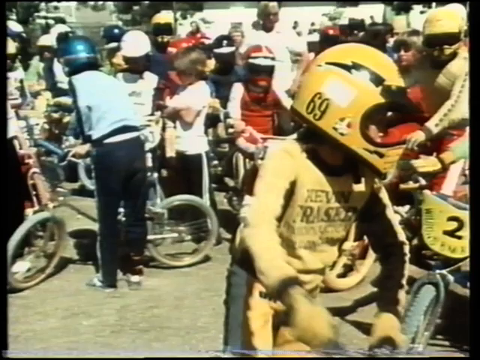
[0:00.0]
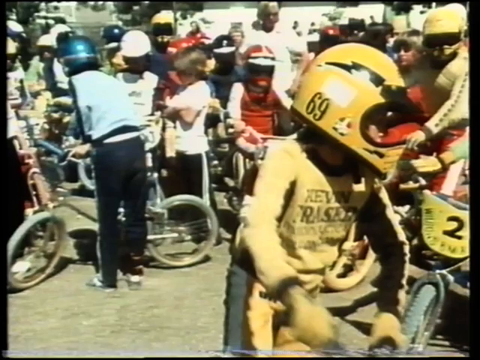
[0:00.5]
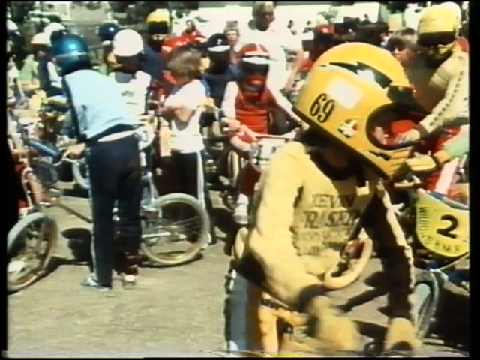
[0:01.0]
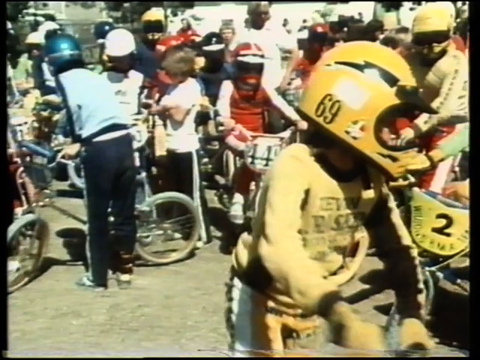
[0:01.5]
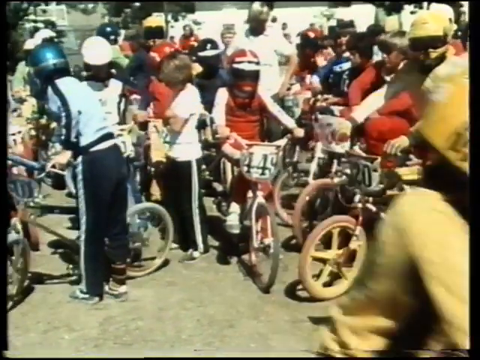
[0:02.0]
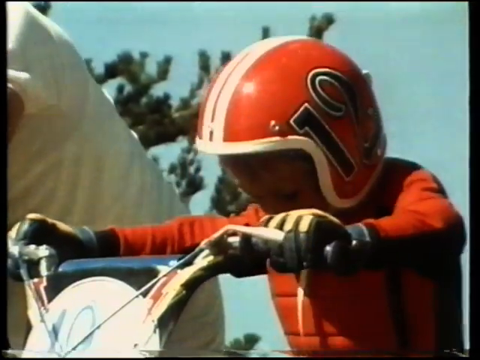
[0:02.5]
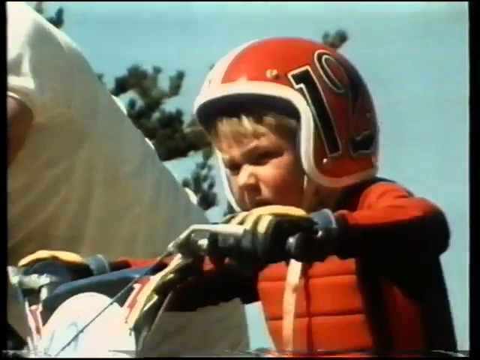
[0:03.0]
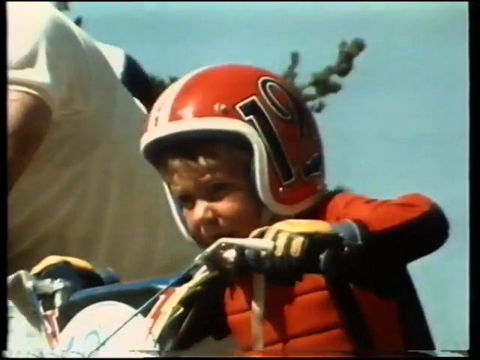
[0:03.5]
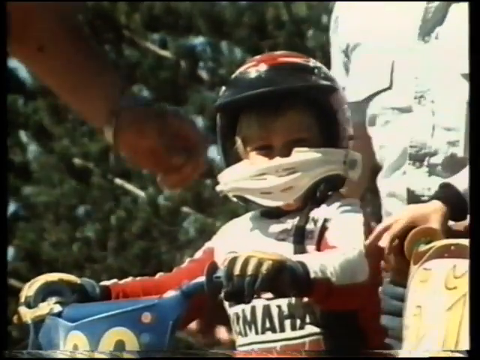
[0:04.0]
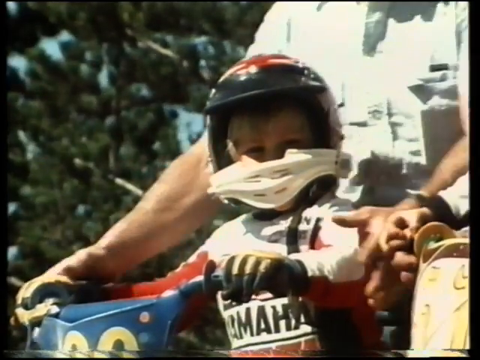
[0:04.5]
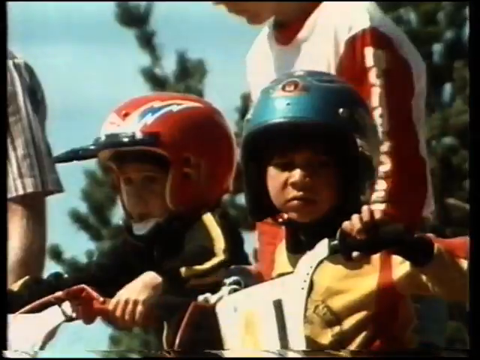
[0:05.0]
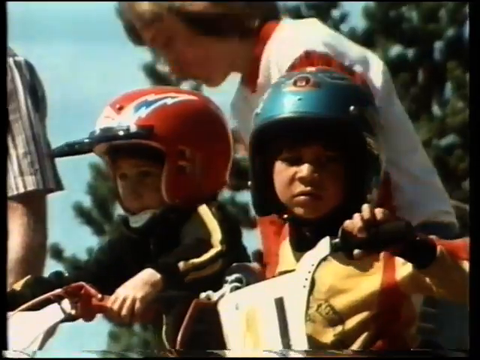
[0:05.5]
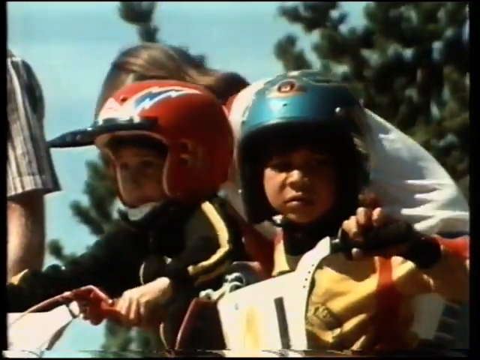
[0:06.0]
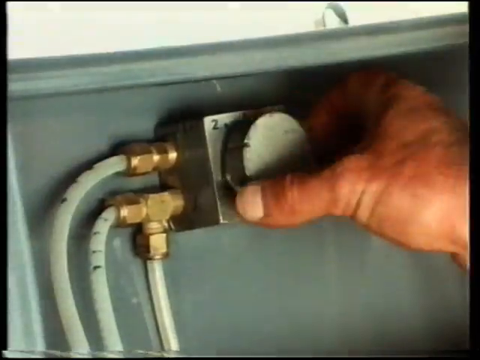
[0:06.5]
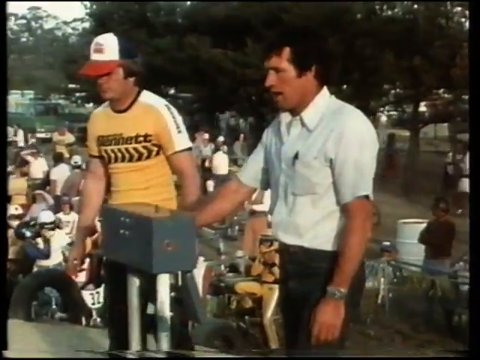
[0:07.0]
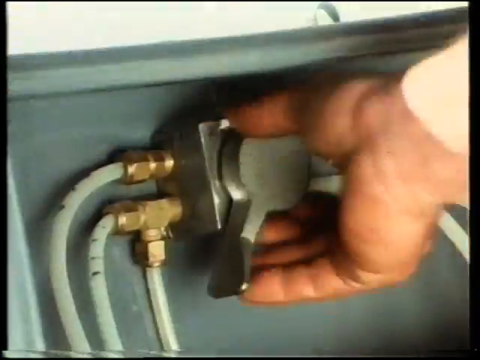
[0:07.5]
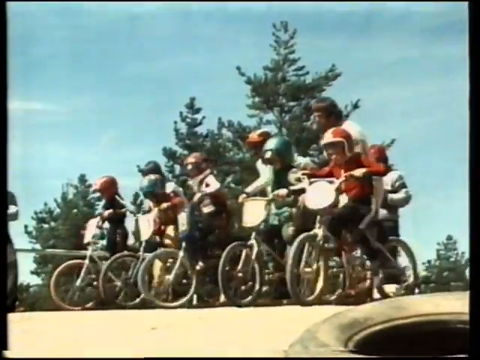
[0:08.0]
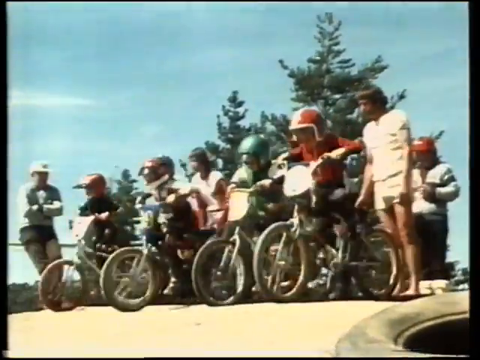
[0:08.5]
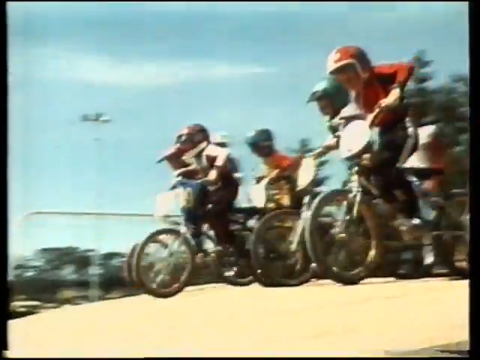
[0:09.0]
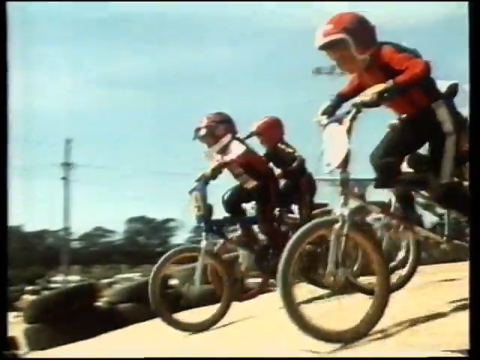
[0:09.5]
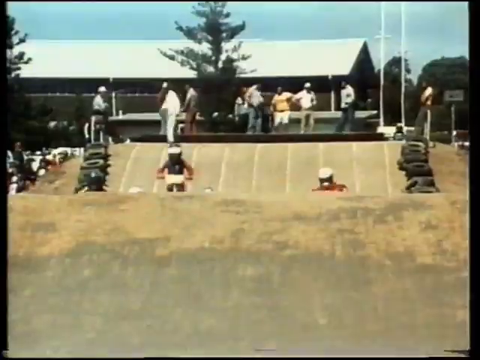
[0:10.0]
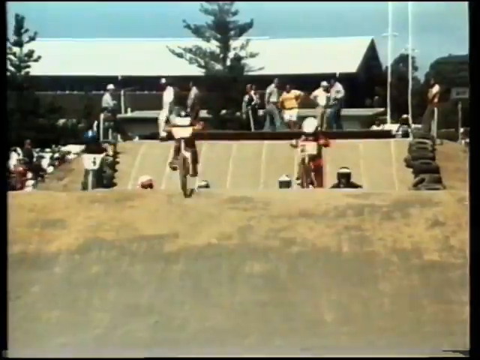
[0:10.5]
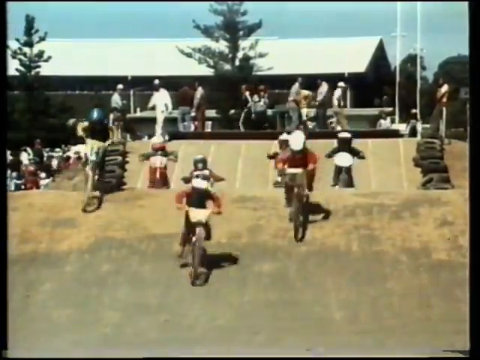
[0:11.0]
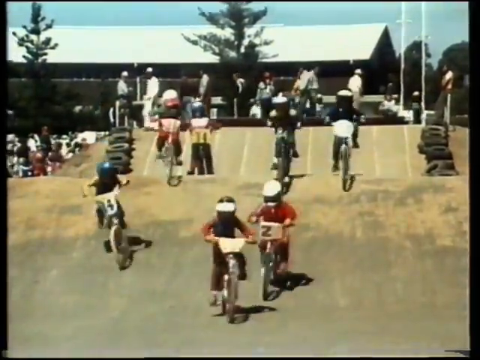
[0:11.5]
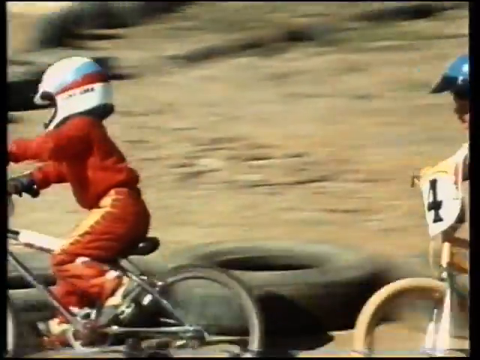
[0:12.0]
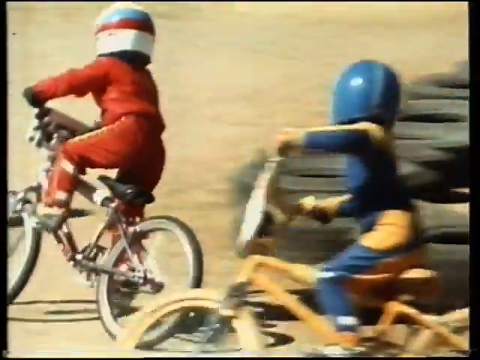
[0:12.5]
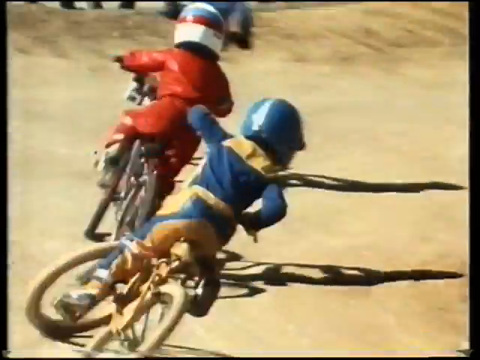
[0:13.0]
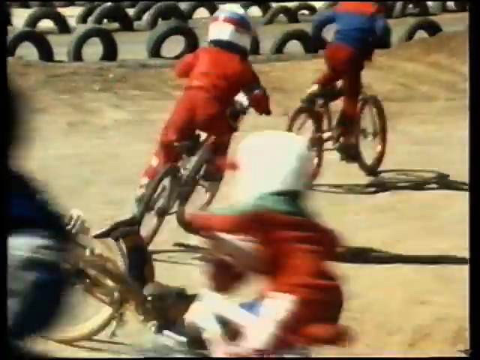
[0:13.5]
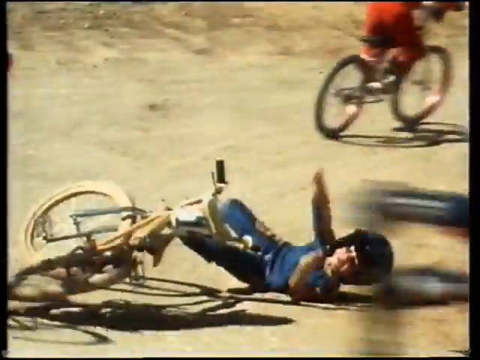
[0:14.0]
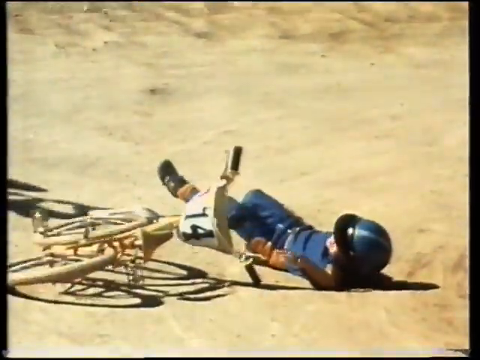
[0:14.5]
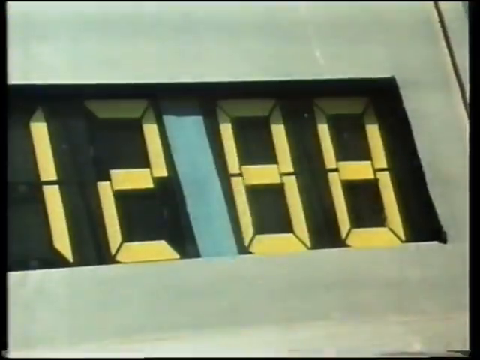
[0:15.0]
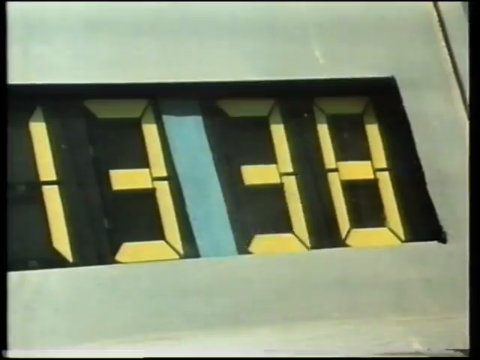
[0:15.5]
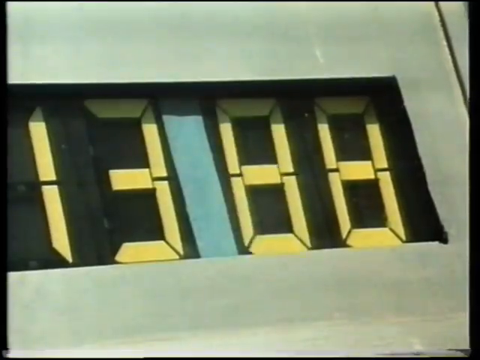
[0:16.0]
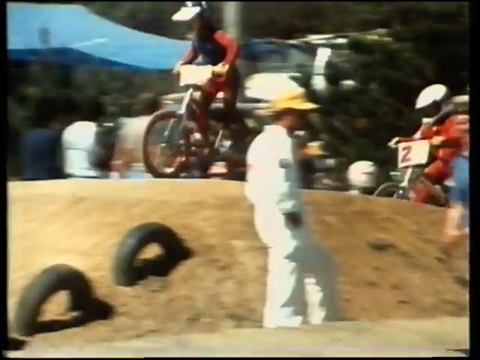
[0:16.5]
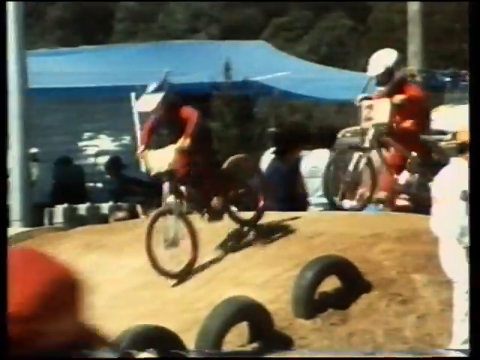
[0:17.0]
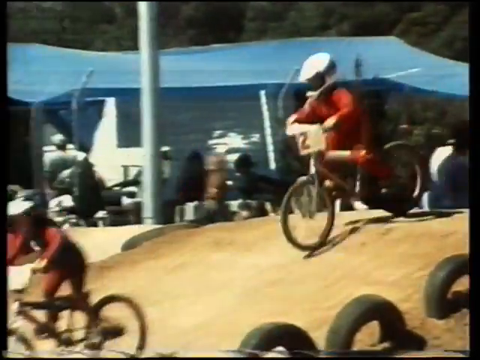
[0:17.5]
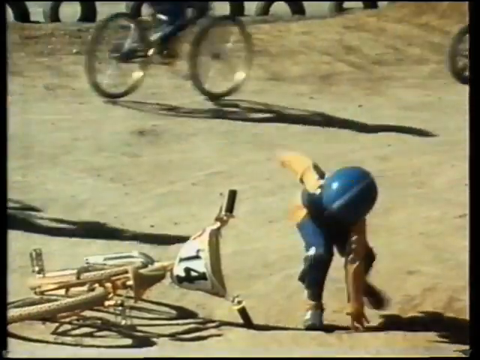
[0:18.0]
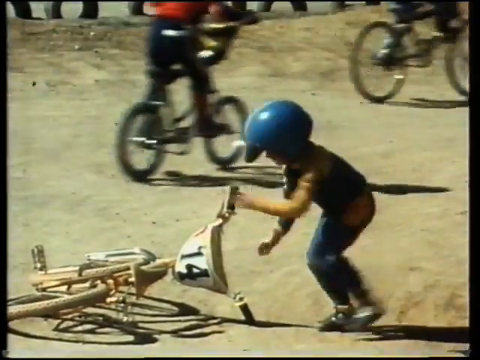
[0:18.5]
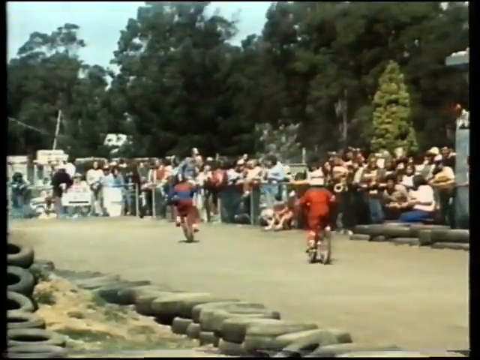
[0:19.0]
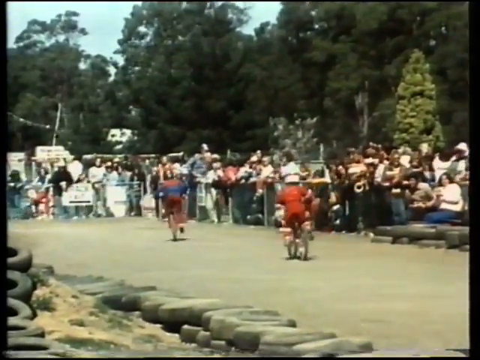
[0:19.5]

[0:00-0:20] The video, titled "1980 BMX racing Australia Oz old school," opens on child racers on little bikes, showing their bicycles and then the children riding. Almost immediately one of them falls off. Old-school timers are shown, and the kid who fell is quickly trying to get back on his bike; he looks to be fine. Apparently about ten riders are on the track at once, and several other kids appear to be waiting for their turn on the track; all of them are being timed. Adults are nearby. The children wear helmets, little suits and gloves but not much padding, and some of them have no goggles or masks covering their eyes. They pedal away on their bicycles, fast enough that one kid crashed.